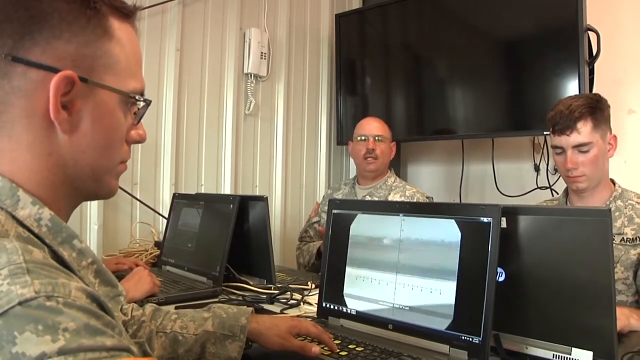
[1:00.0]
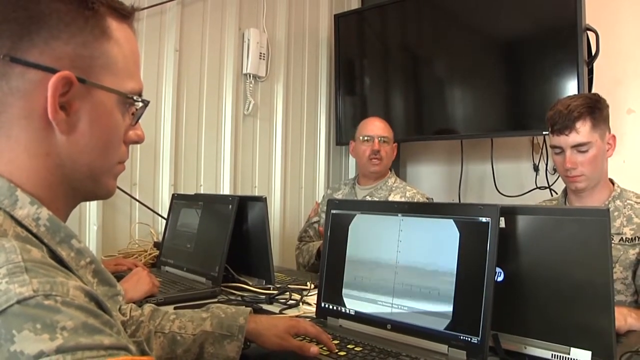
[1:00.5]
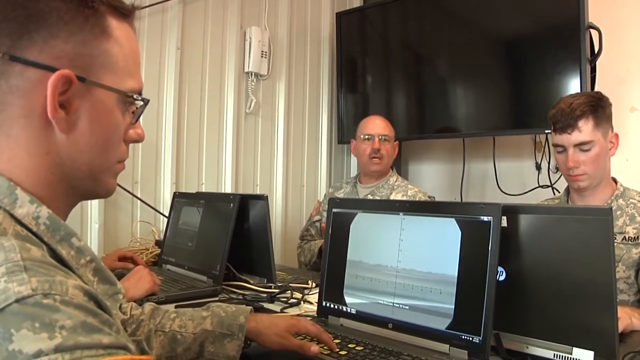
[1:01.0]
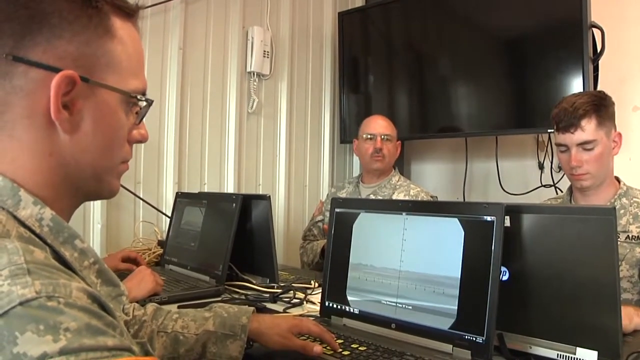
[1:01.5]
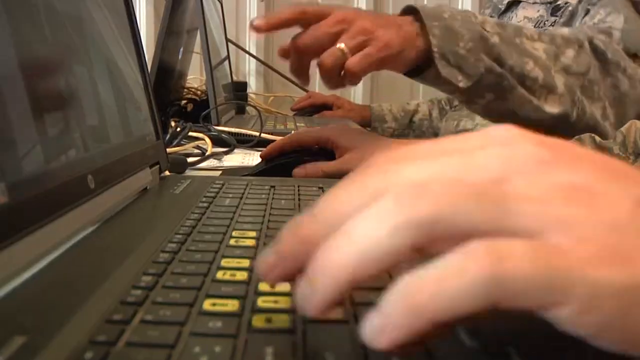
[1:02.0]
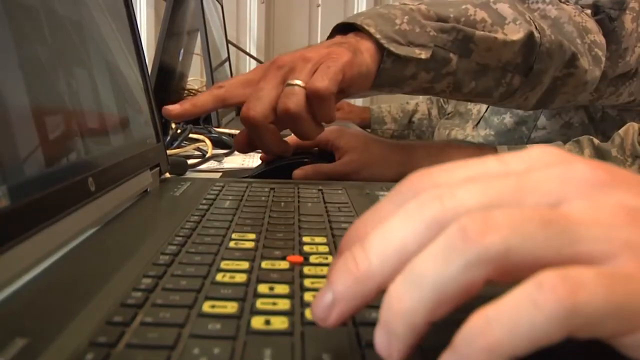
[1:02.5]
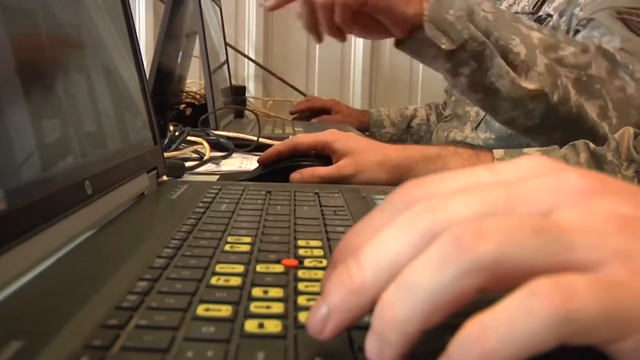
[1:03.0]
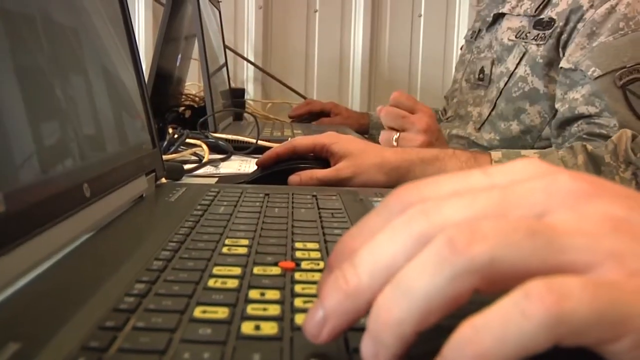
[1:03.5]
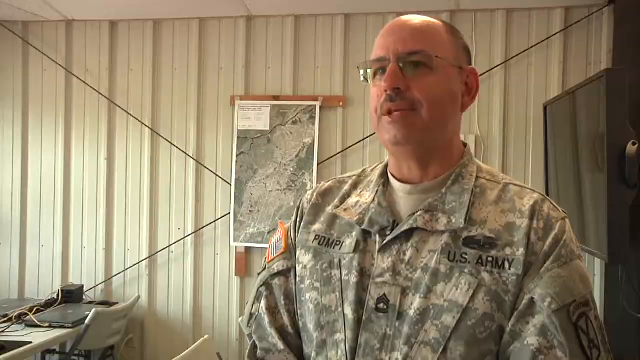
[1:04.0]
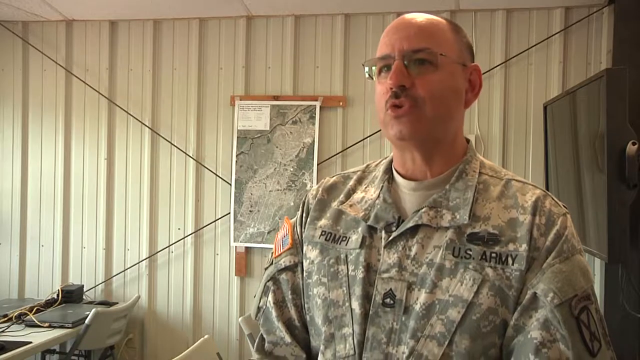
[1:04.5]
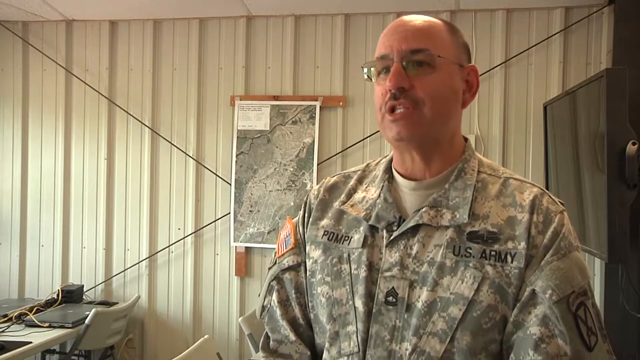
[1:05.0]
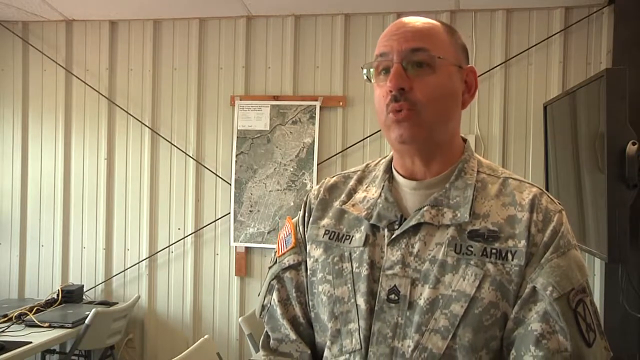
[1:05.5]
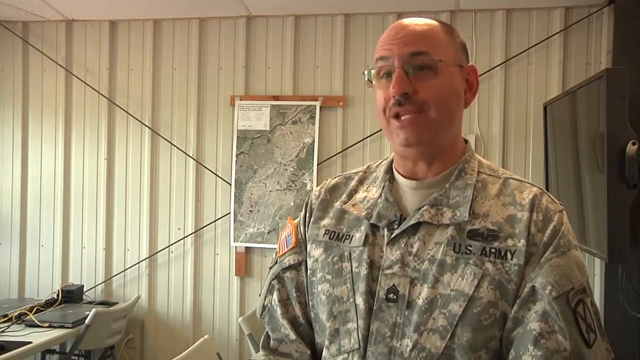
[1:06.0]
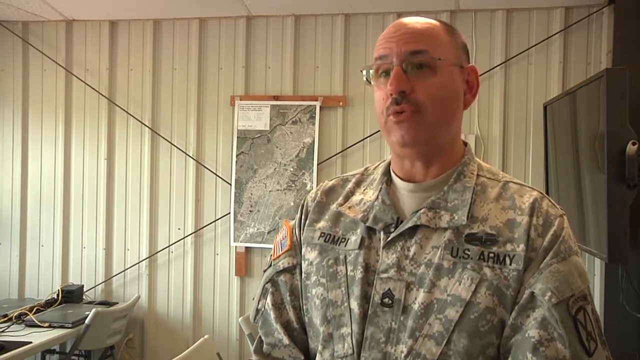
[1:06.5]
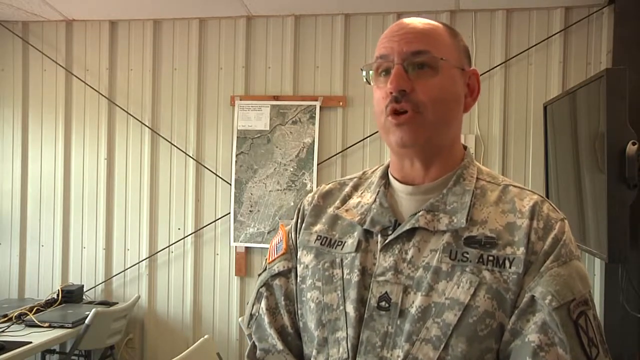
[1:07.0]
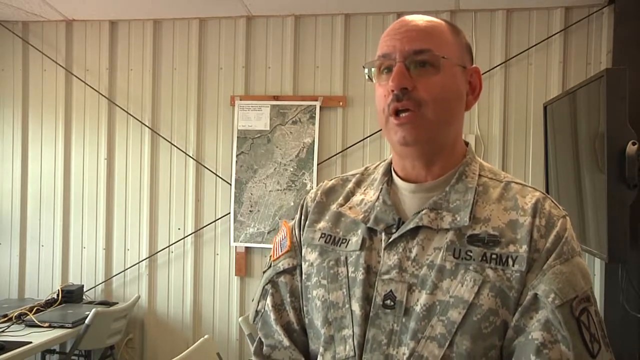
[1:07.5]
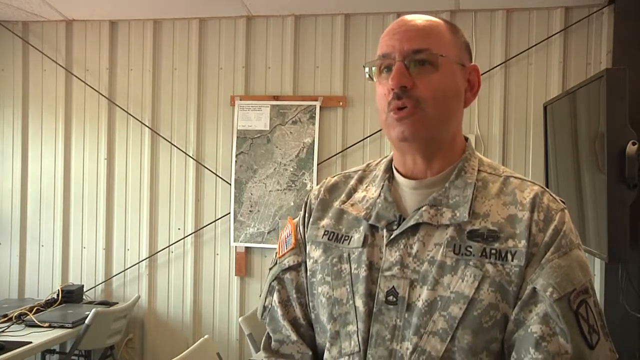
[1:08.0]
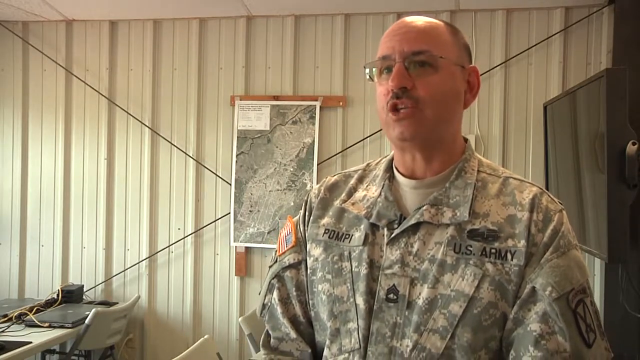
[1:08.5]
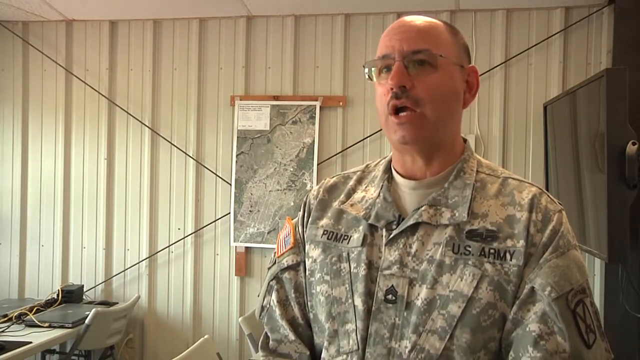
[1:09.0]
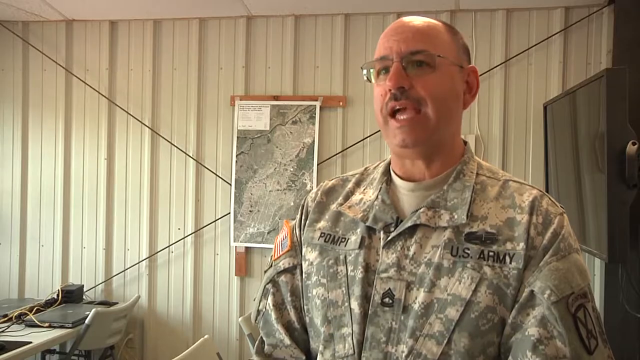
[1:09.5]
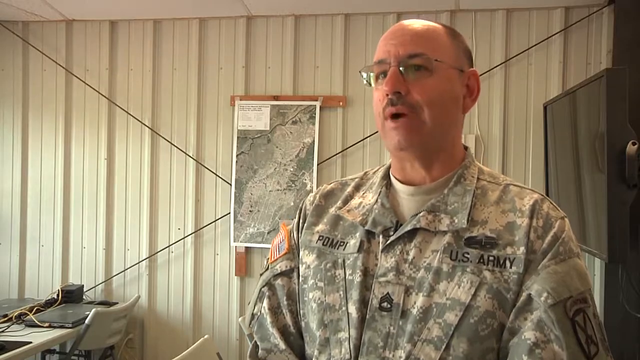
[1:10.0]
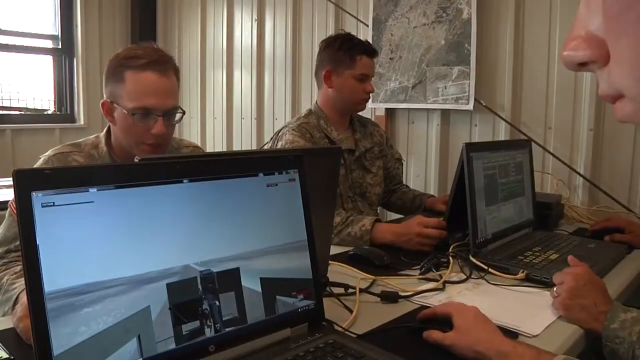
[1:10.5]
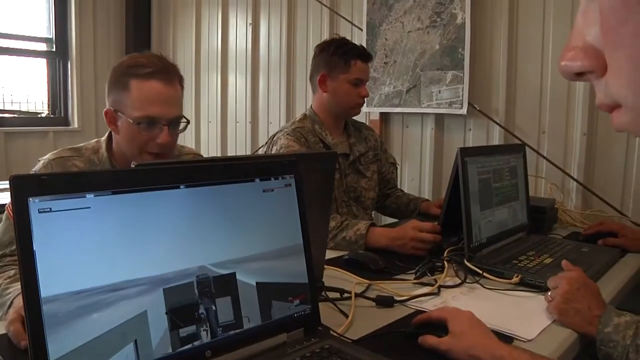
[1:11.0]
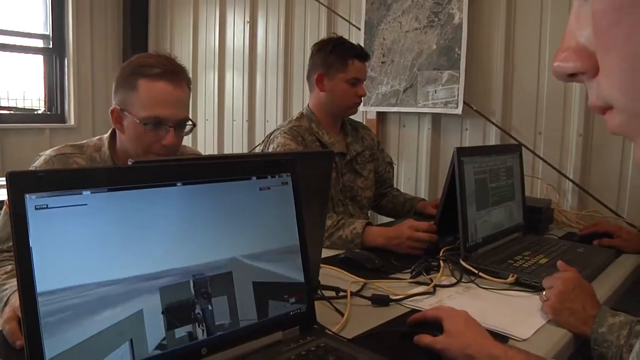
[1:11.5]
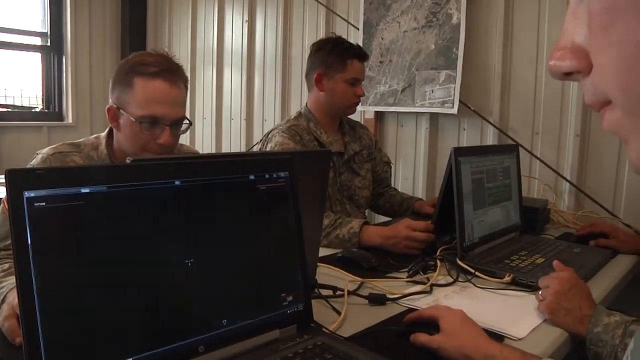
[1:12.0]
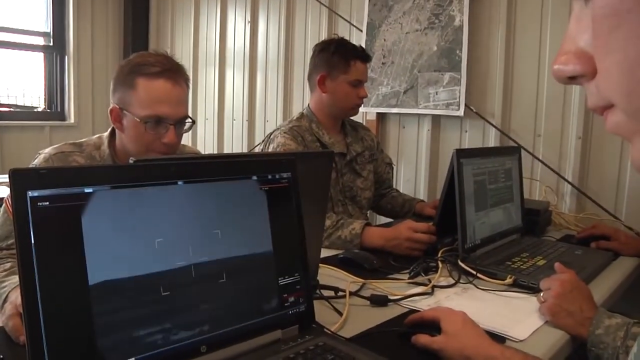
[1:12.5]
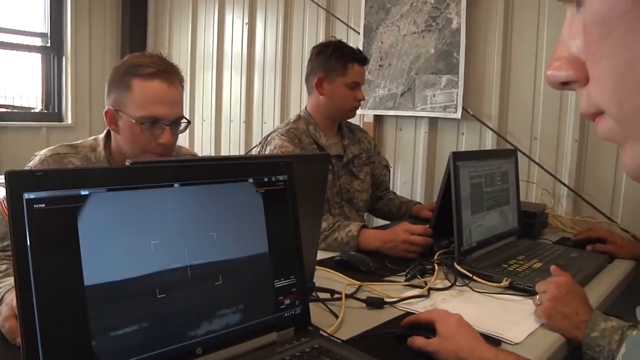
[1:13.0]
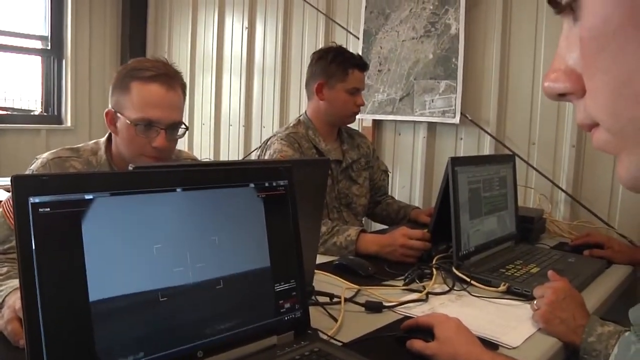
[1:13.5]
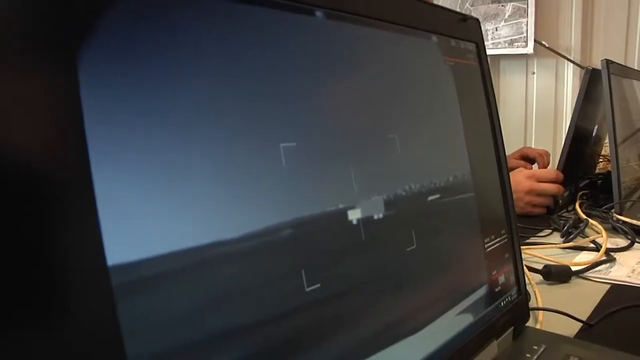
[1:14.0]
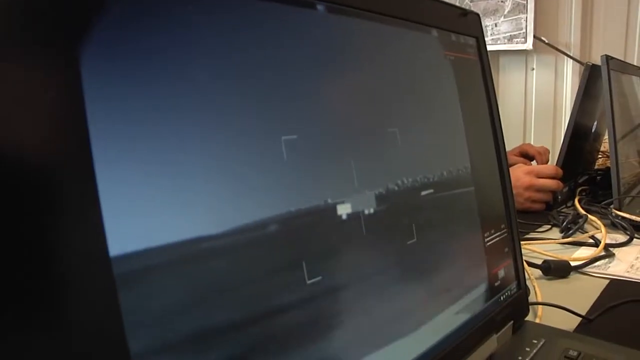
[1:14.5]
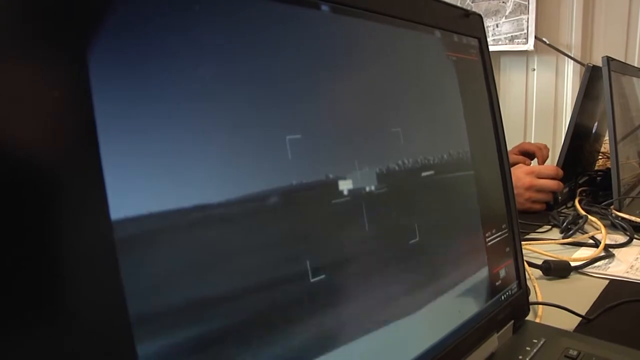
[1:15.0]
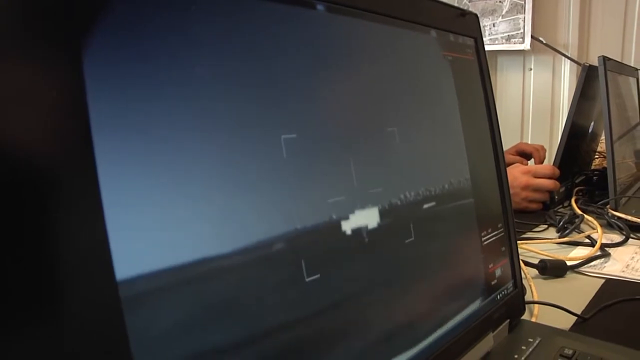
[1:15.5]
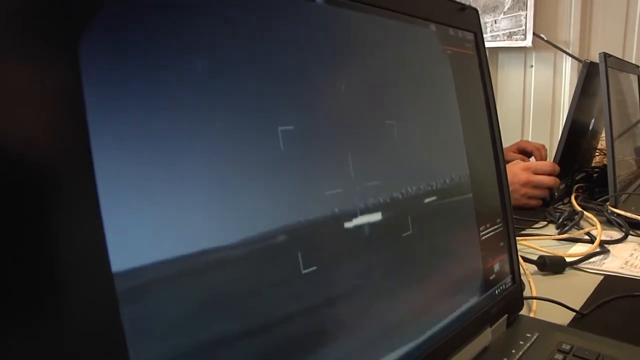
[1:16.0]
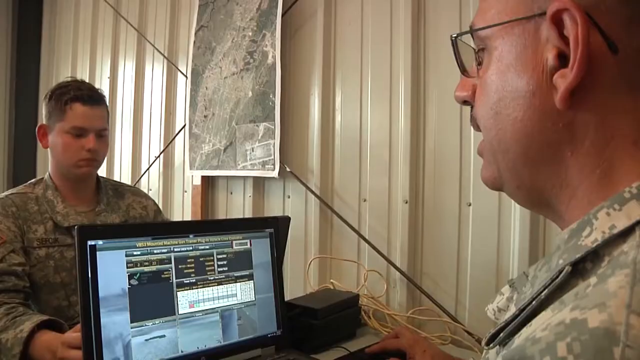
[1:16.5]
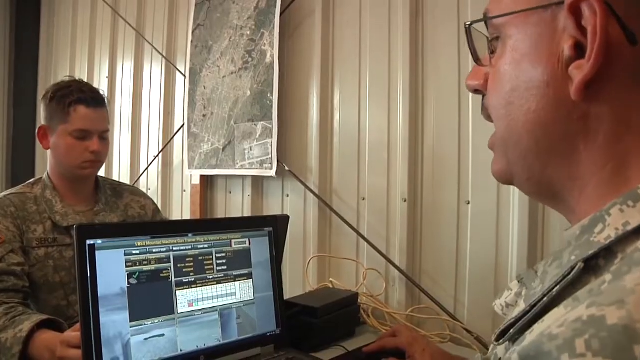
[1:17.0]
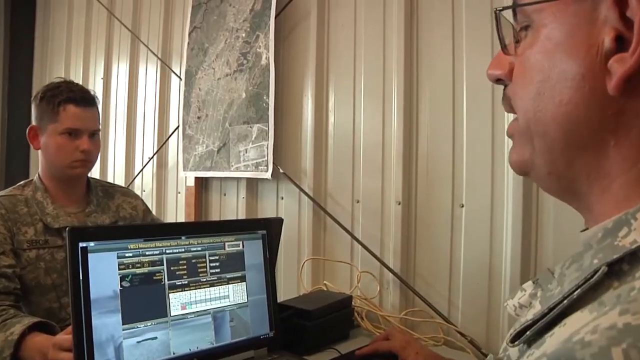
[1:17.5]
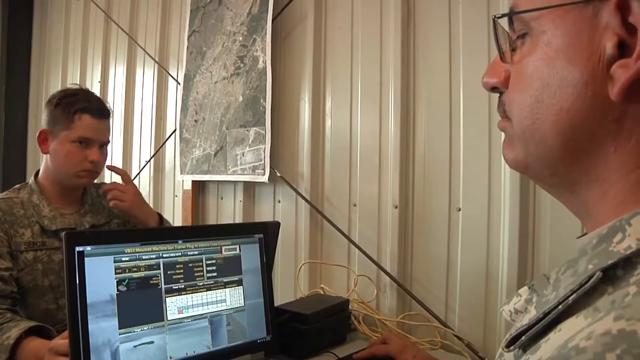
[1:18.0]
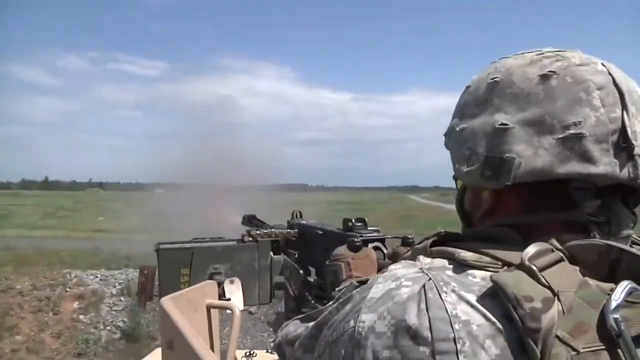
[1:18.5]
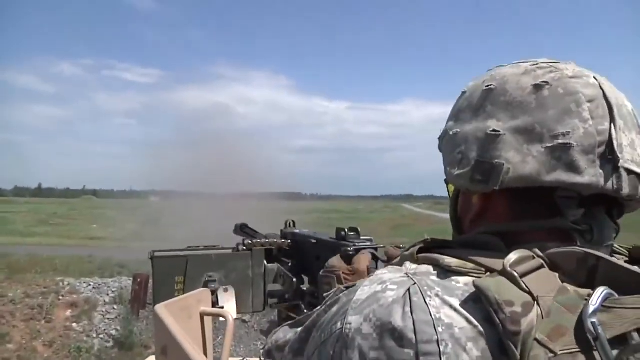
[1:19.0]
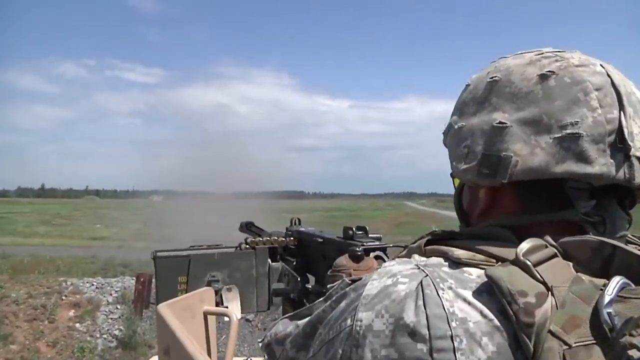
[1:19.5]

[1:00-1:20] In a room, four soldiers sit in front of what look like laptops or screens, analyzing footage shown on them. One who looks like the senior officer points at the screen of the soldier sitting next to him, possibly viewing some footage. The camera moves to this man, possibly the senior officer, who speaks to the camera in front of a map, possibly of the area they are in. He wears full US Army gear, with his name on the right side of his chest reading "Pompi." The camera pans back across the soldiers sitting in front of their screens, observing and analyzing footage; it seems they can see who is shooting, which vehicle is shooting and where it is turning. The walls of the room look like they are made of metal sheets rather than brick. There is a TV at the back, possibly for CCTV, and all the soldiers wear US military clothes.